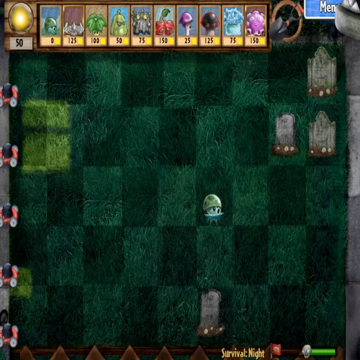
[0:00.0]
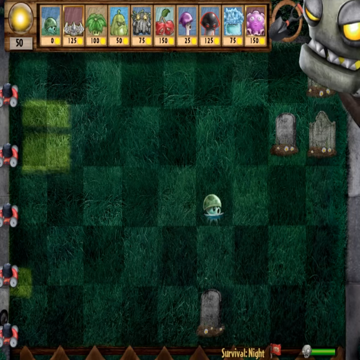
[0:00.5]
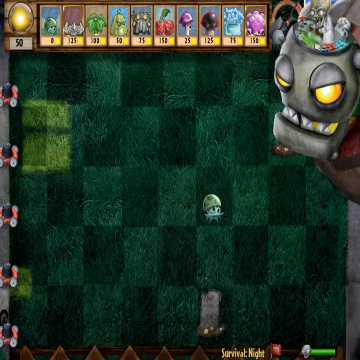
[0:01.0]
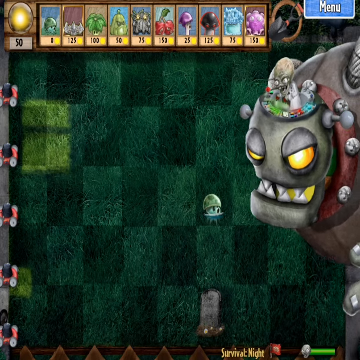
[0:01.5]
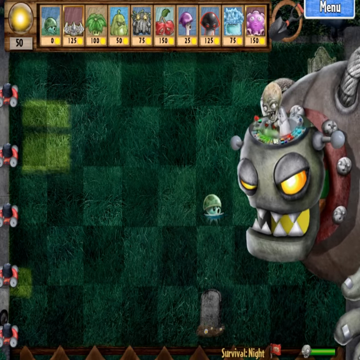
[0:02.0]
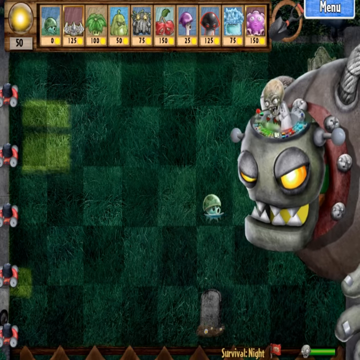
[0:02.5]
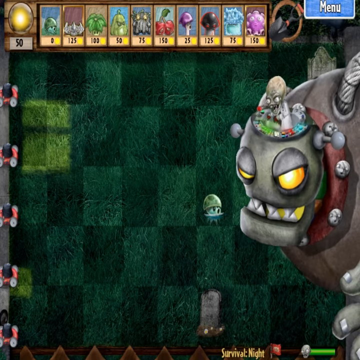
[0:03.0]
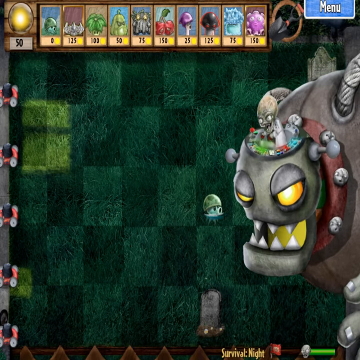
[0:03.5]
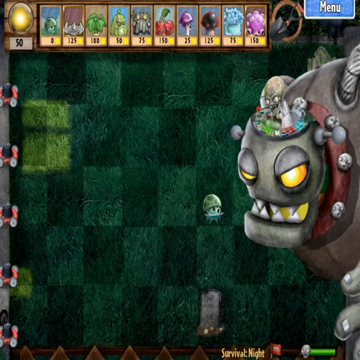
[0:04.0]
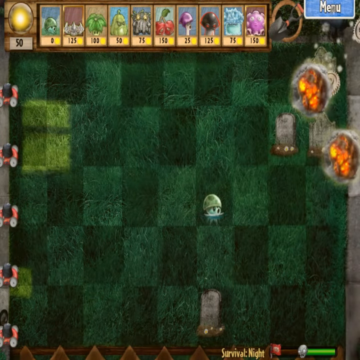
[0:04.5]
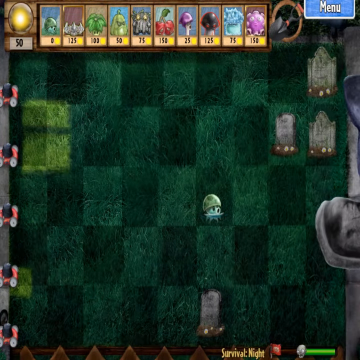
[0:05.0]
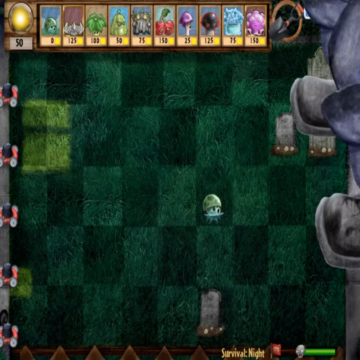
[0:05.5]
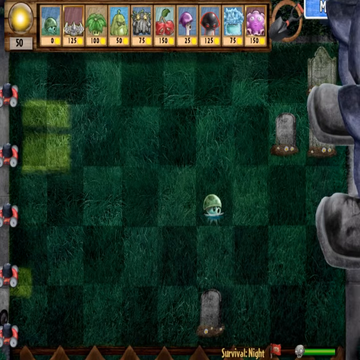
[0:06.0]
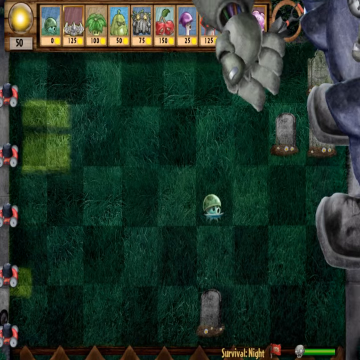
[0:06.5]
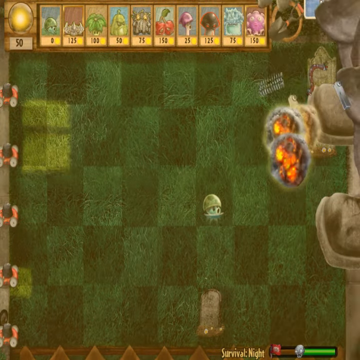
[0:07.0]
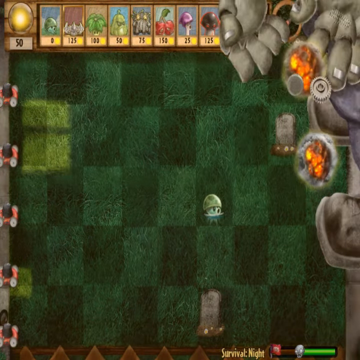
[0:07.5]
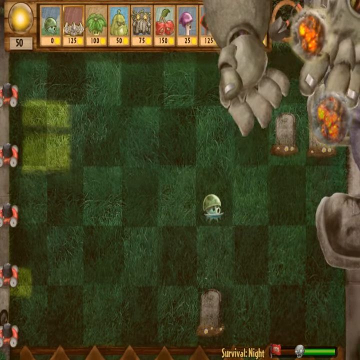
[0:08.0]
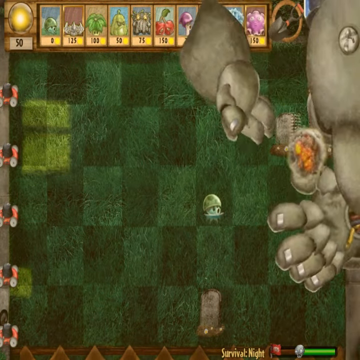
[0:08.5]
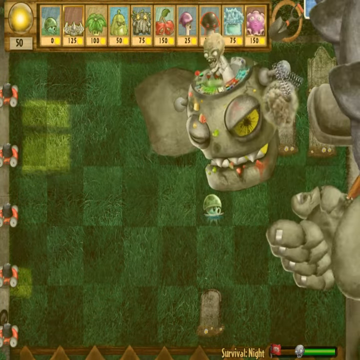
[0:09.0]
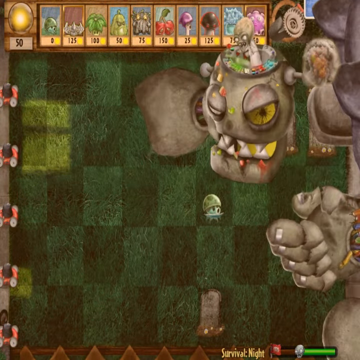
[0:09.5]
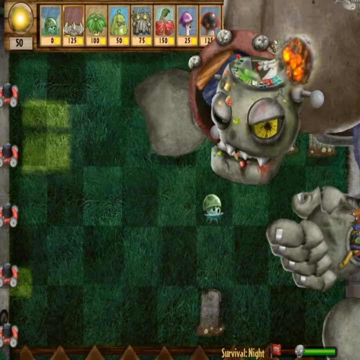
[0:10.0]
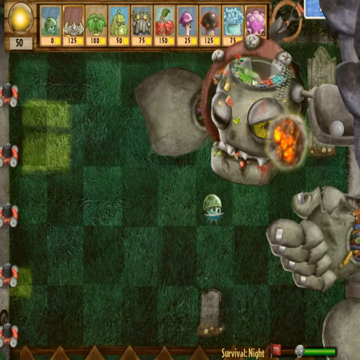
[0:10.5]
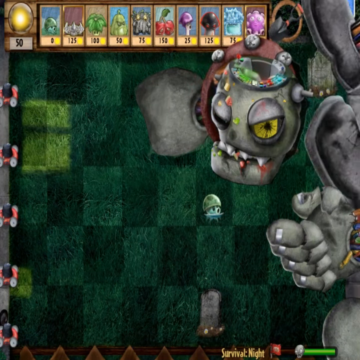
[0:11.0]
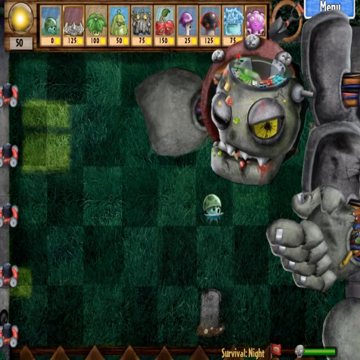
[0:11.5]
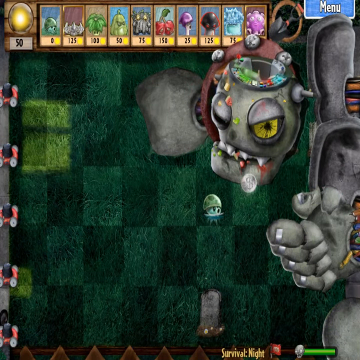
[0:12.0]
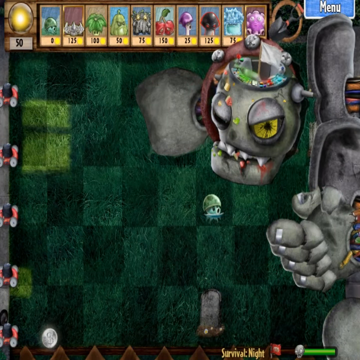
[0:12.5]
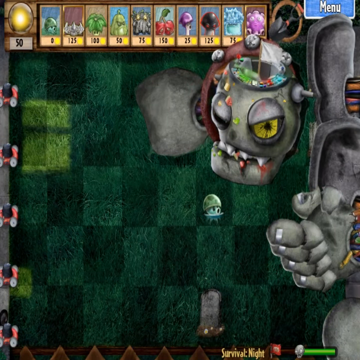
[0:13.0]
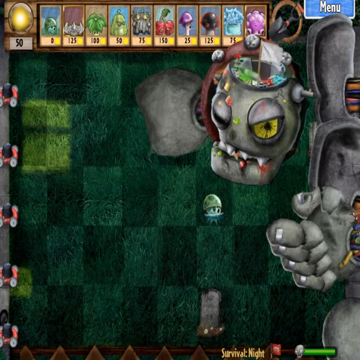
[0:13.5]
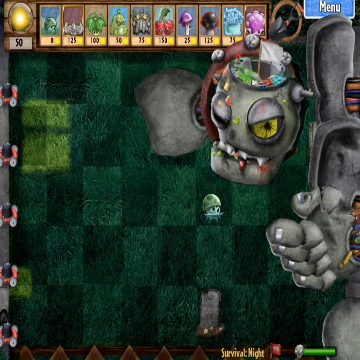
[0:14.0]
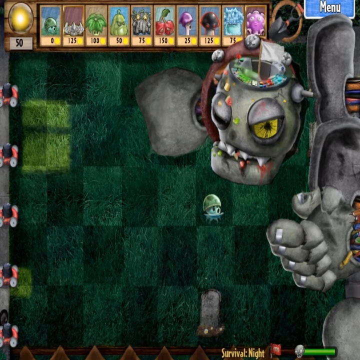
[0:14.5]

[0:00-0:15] The game appears to be Plants vs. Zombies; it is a PC game. A lawn-style checkerboard background fills the play area. Along the top are squares for the different characters, each with a golden bar showing points and each character's picture centered below them; there seem to be ten characters listed. A menu is also visible. On the right-hand side, a larger-than-life robot character appears, which looks like a villain, apparently the one to be defeated. What look like little small tanks are on the left-hand side. A little alien ladybug in the center of the chessboard shoots at the alien and shoots it down. The power is shown at the bottom, and the score is in the top right corner.